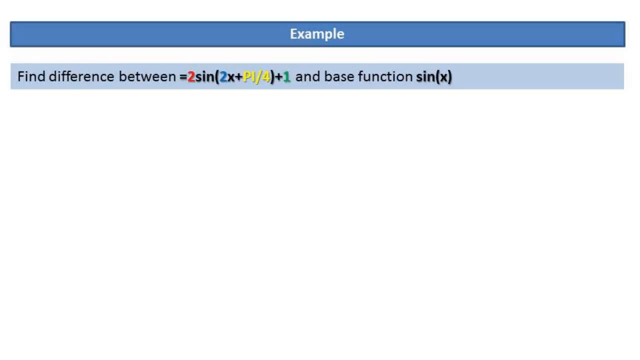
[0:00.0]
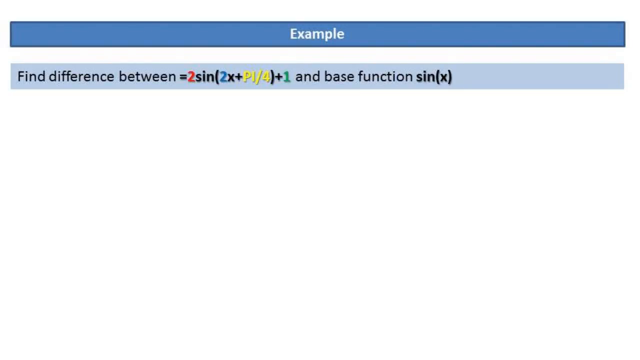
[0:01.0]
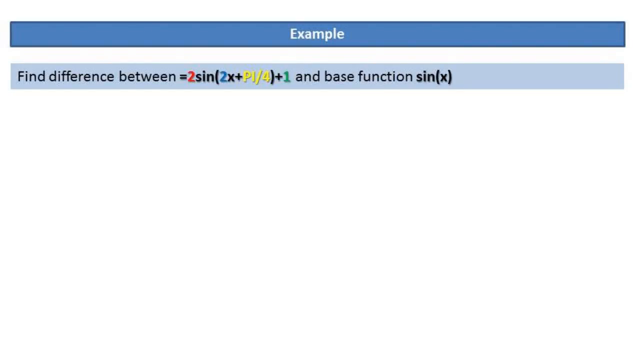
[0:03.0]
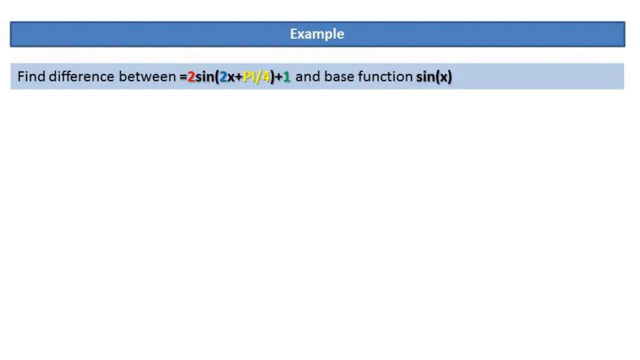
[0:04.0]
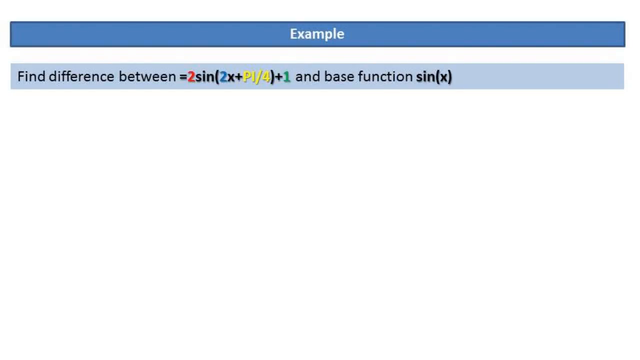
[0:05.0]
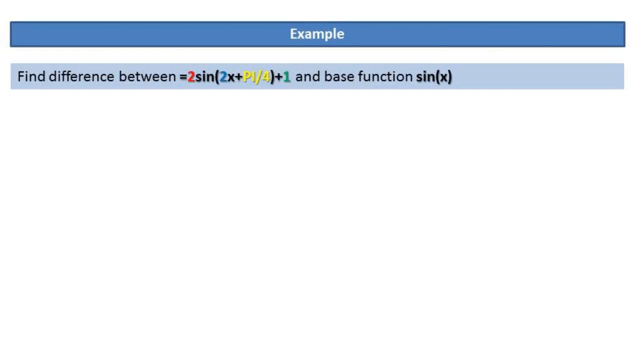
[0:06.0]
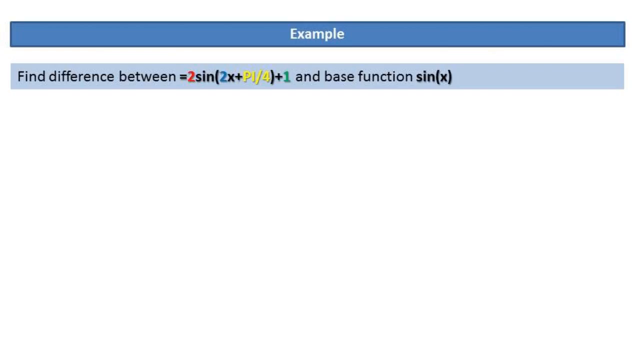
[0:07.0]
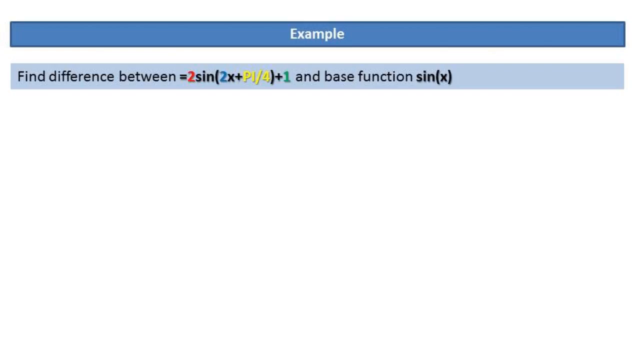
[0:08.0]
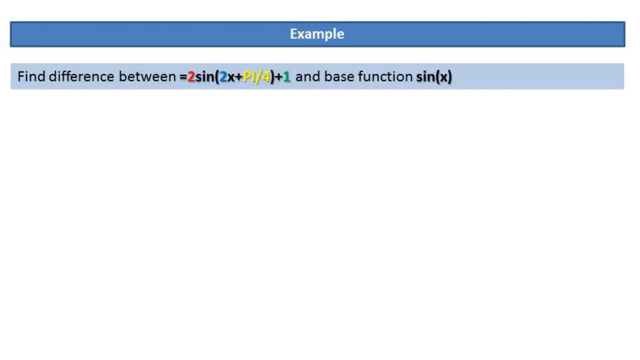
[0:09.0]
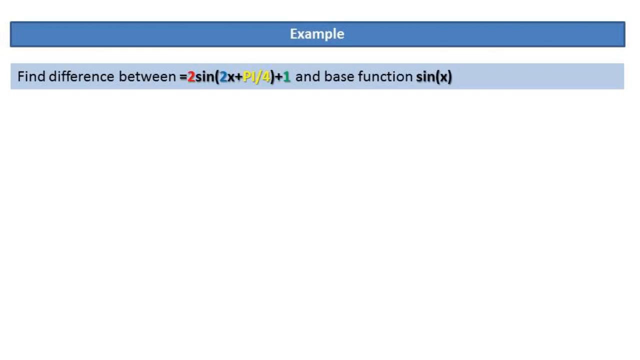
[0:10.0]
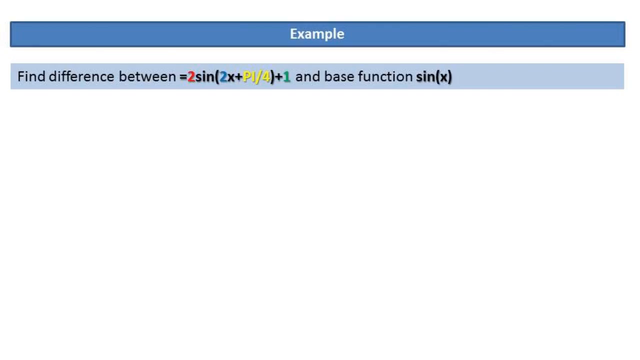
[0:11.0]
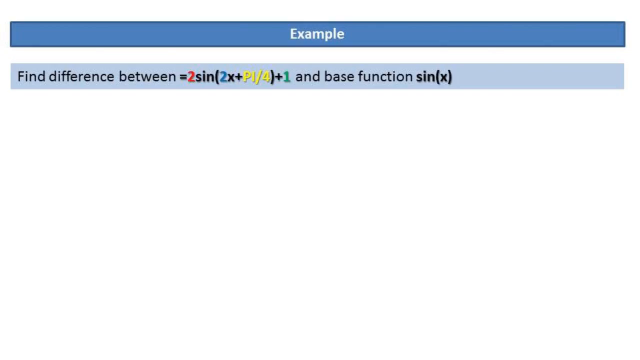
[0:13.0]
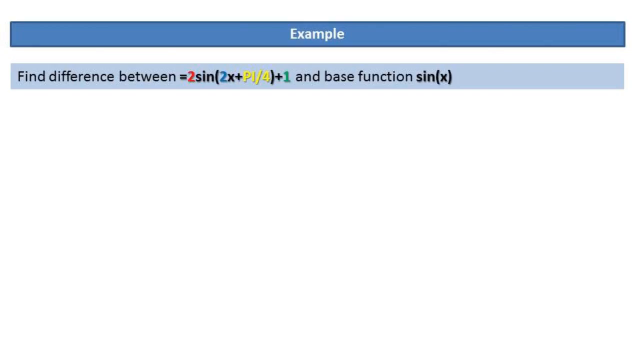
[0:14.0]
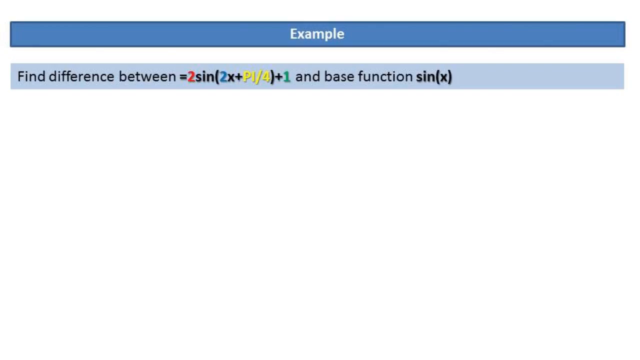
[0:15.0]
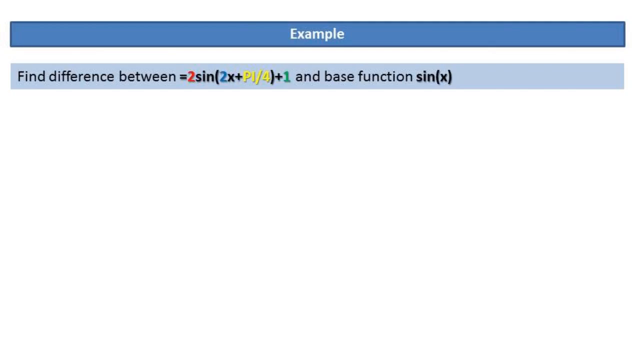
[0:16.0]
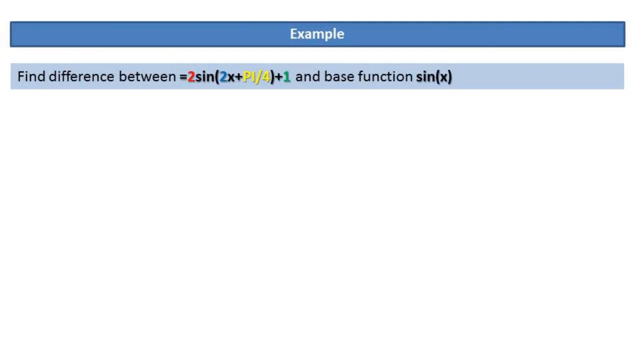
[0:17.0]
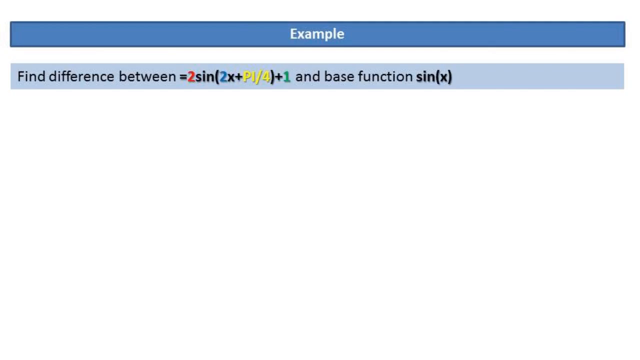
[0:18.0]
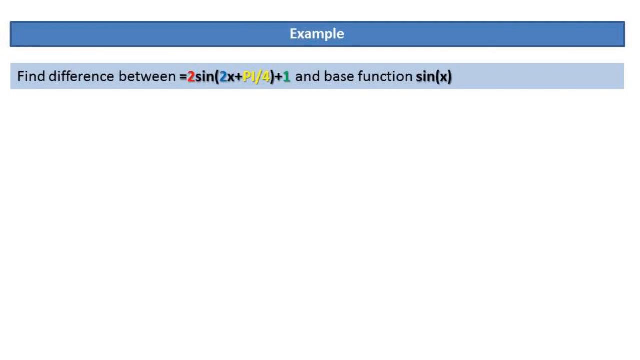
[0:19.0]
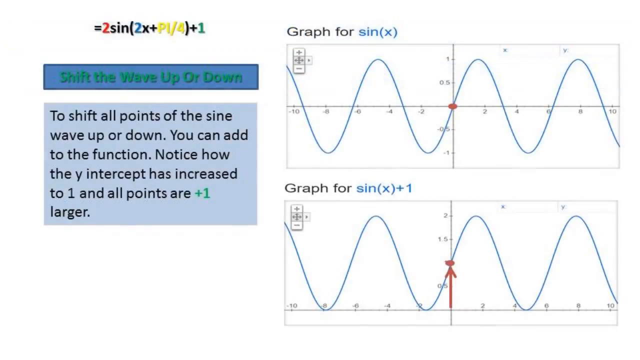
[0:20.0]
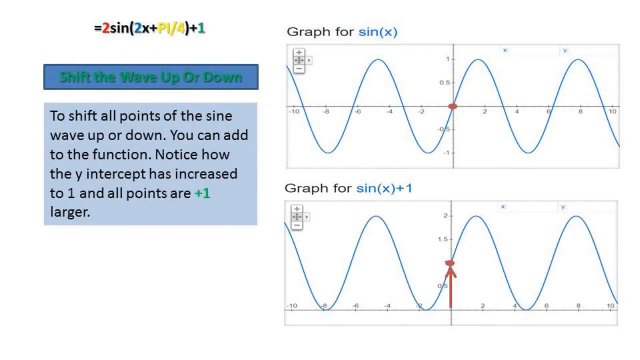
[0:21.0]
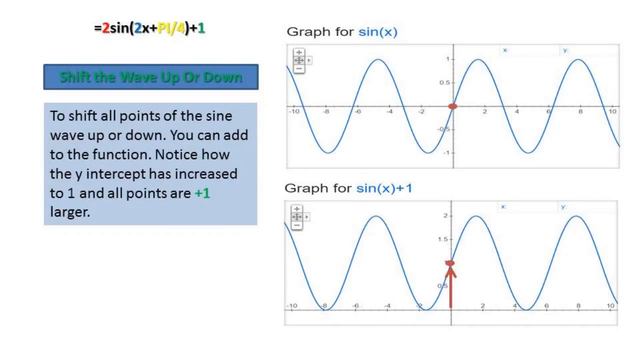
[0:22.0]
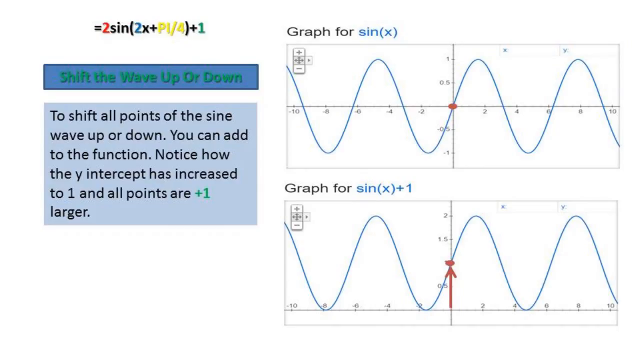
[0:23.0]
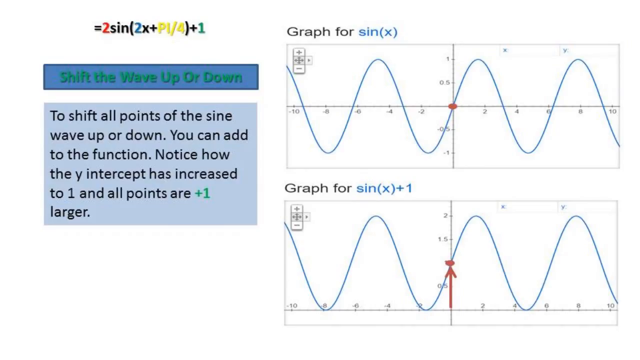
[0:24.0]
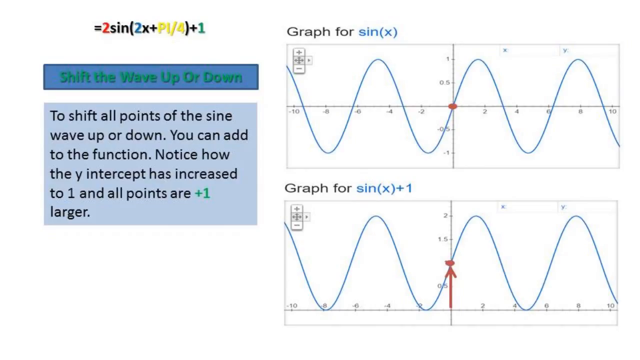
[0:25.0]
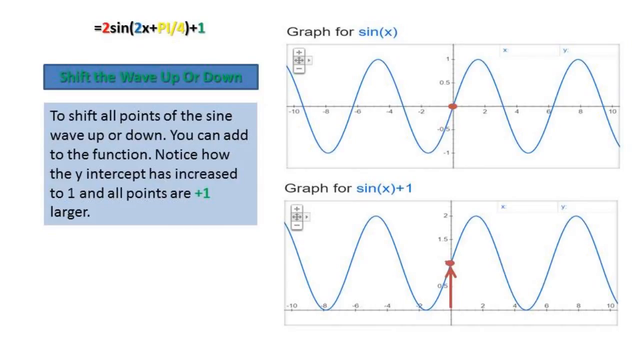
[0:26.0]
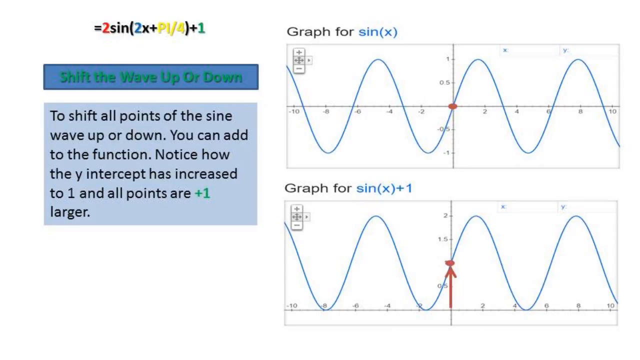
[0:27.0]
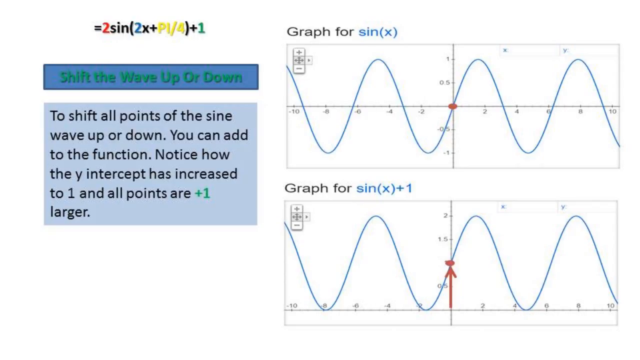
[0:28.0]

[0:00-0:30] A screen with a blue and white background shows an example asking to find the difference between 2 sin(2x + π/4) + 1 and the base function sin x. The screen then changes, but the white background stays. The next slide shows a graph for sin x and a graph for sin x + 1. Text on the left reads "shift all points of the sine wave up or down", says a number can be added to the function, and notes "notice how the y intercept has increased to 1" and that all points are 1 larger. The graph for sin x + 1 lies entirely above y = 0. The graphs are shown at the top and below, displaying the difference.